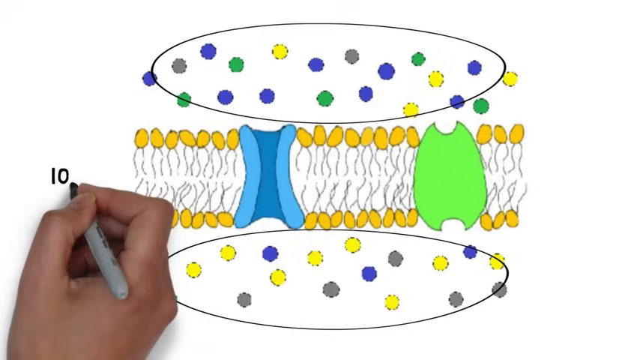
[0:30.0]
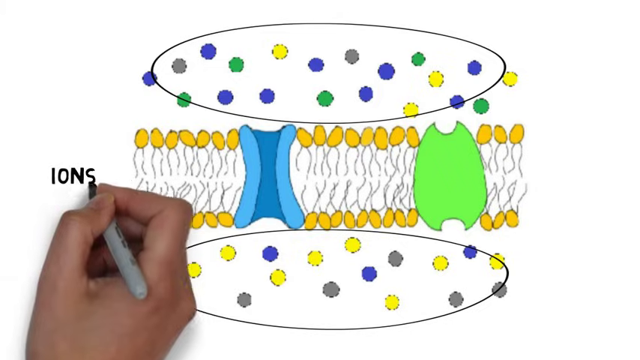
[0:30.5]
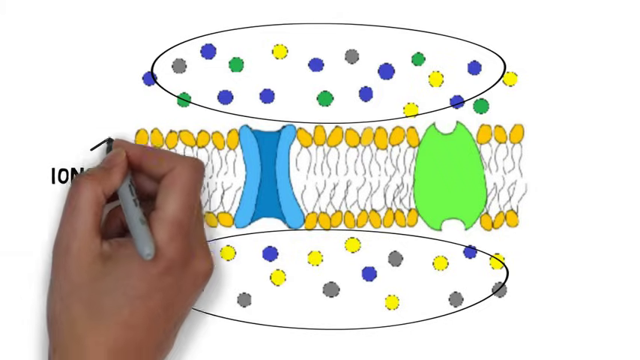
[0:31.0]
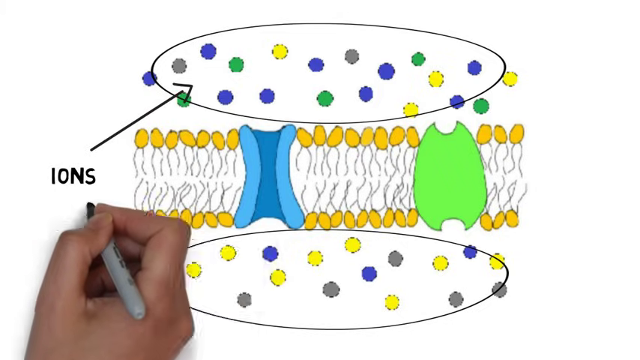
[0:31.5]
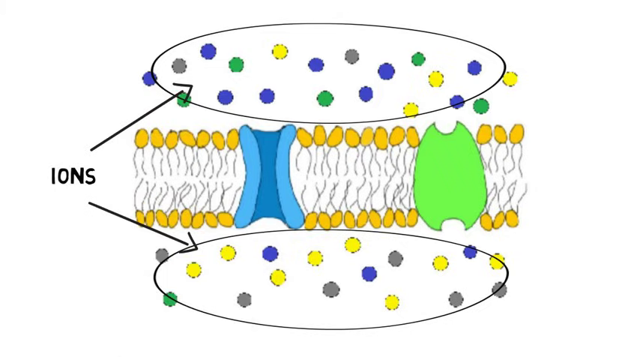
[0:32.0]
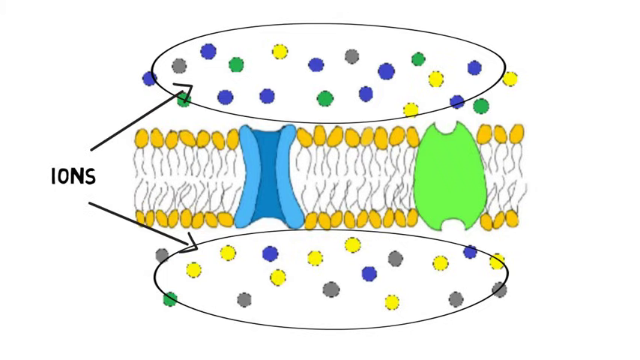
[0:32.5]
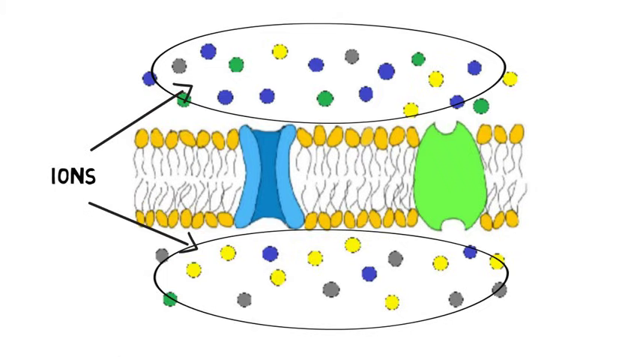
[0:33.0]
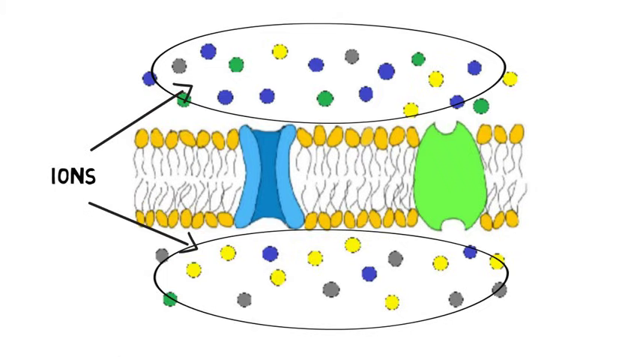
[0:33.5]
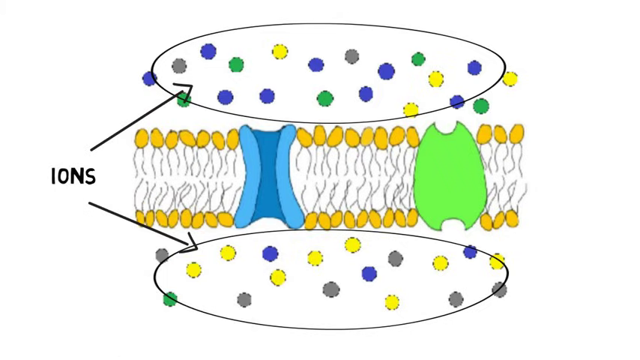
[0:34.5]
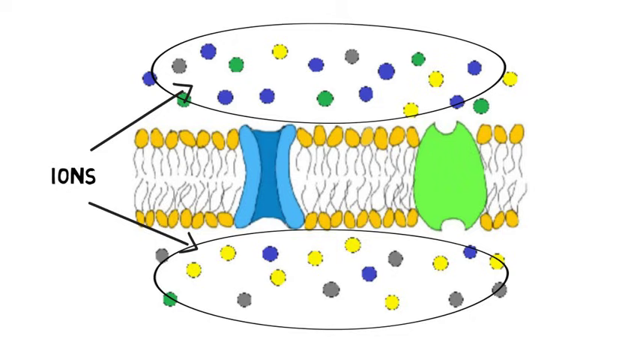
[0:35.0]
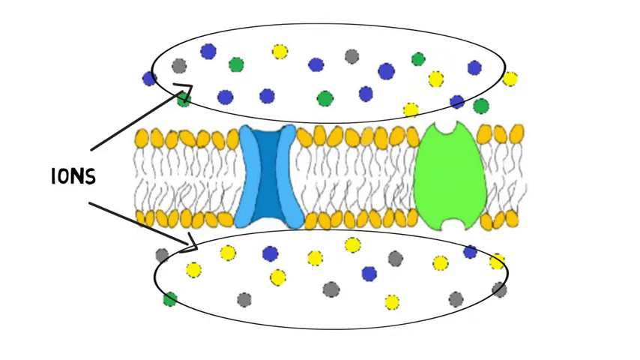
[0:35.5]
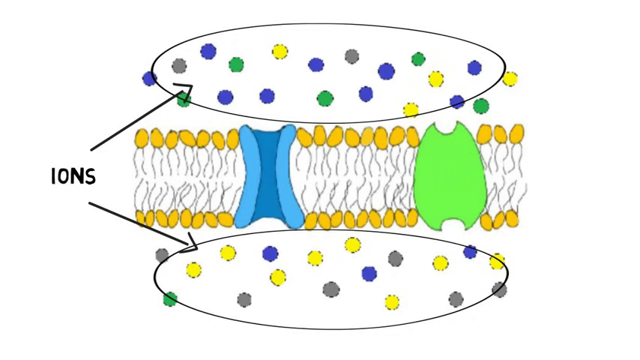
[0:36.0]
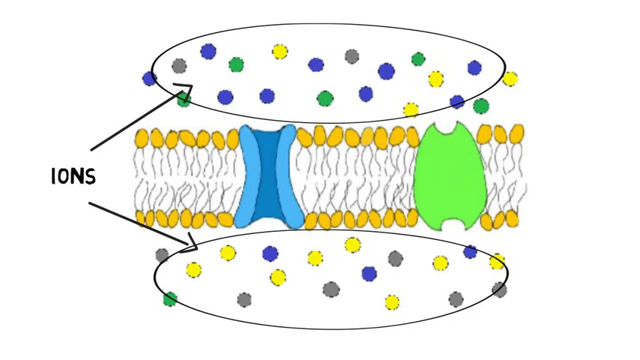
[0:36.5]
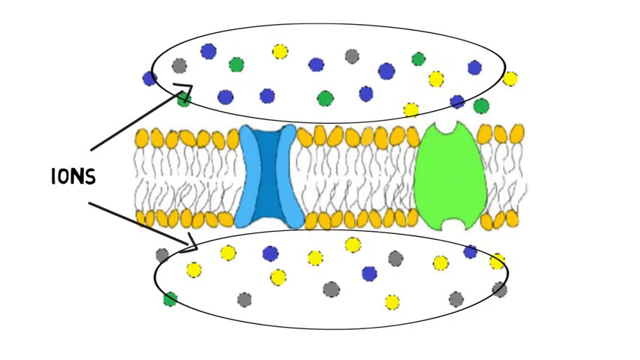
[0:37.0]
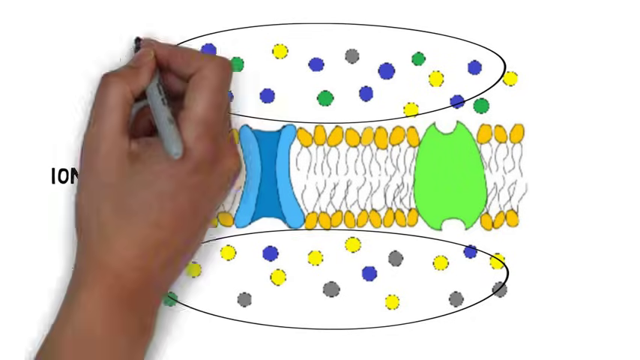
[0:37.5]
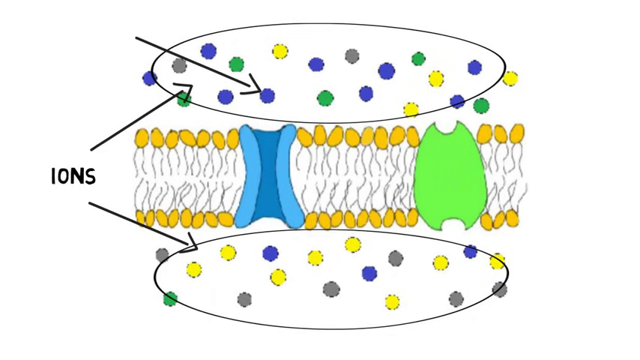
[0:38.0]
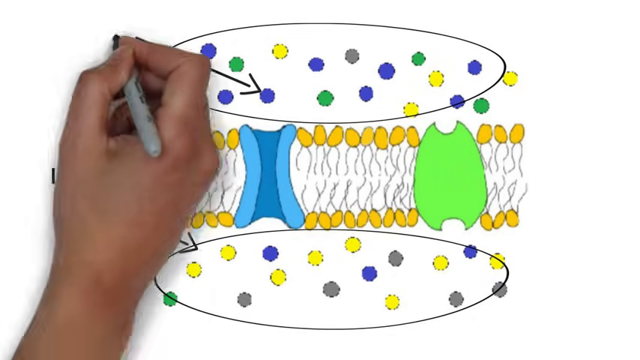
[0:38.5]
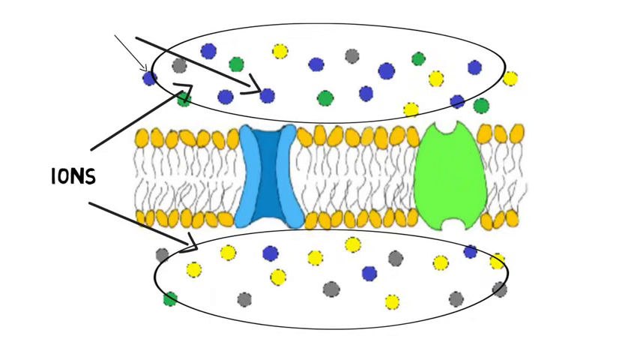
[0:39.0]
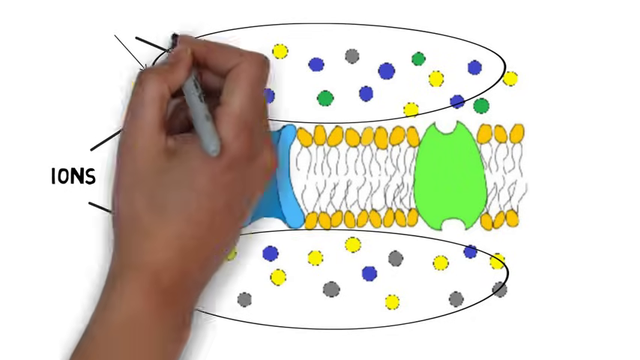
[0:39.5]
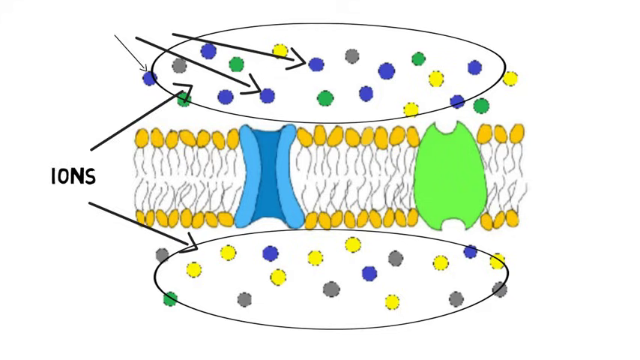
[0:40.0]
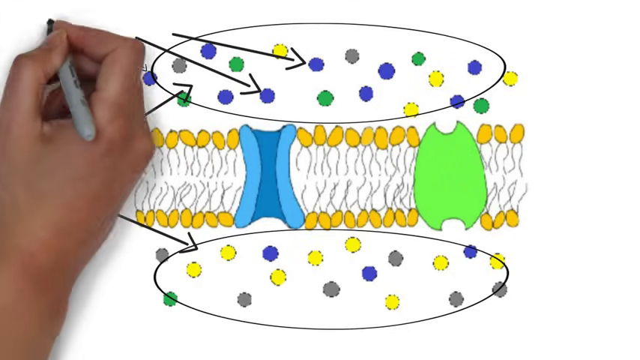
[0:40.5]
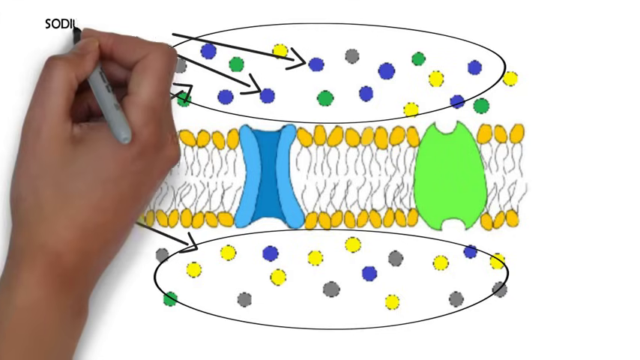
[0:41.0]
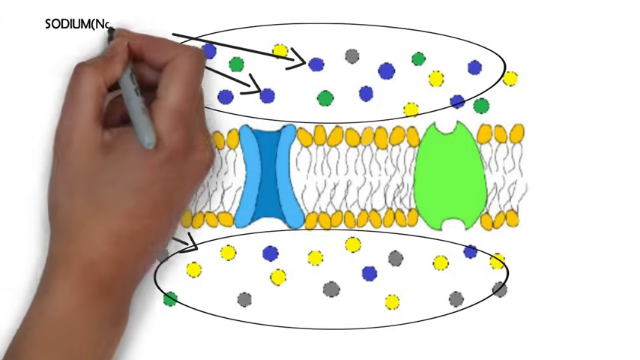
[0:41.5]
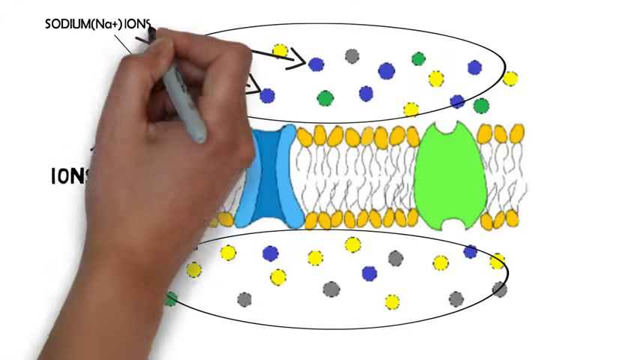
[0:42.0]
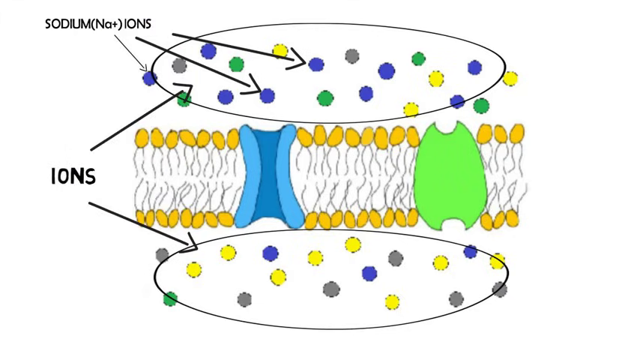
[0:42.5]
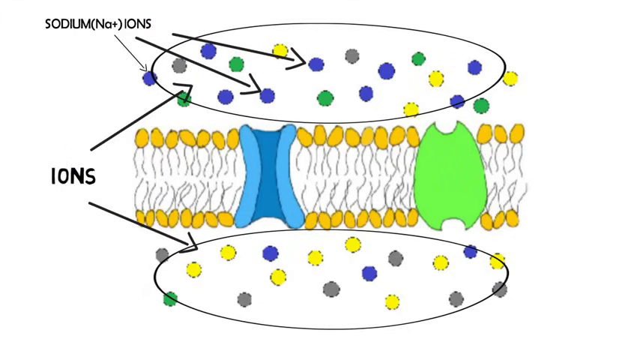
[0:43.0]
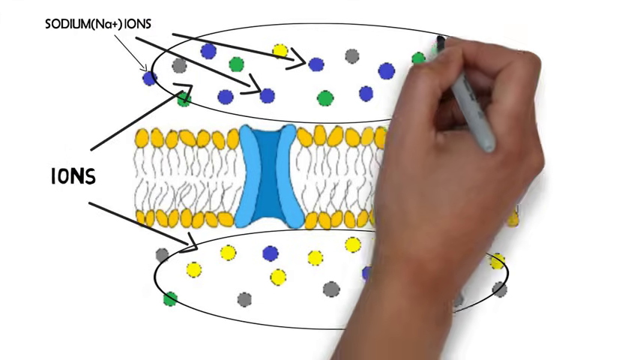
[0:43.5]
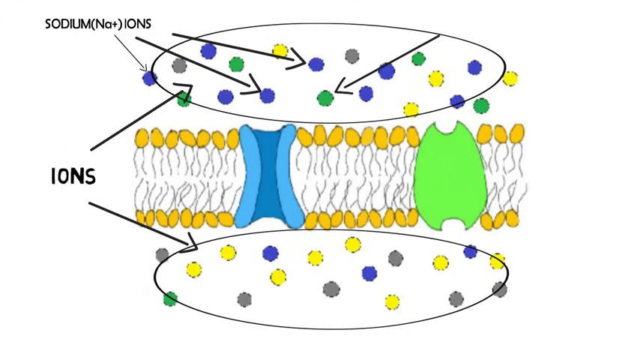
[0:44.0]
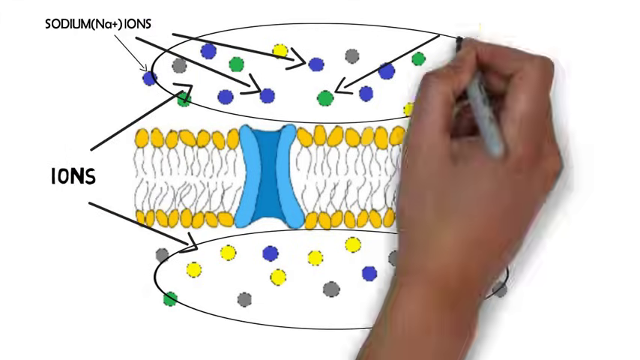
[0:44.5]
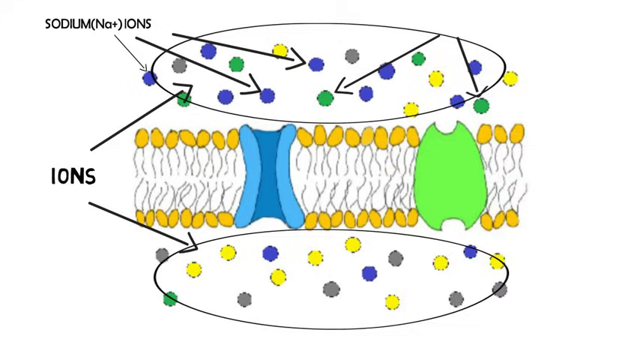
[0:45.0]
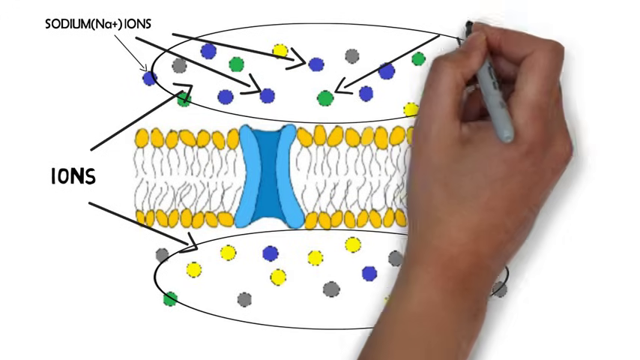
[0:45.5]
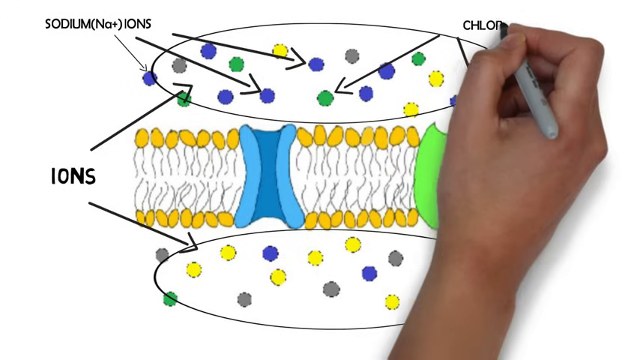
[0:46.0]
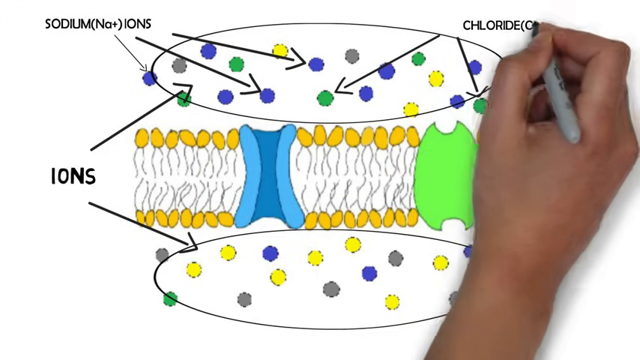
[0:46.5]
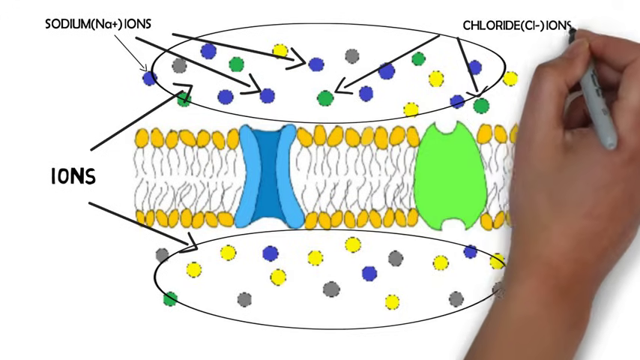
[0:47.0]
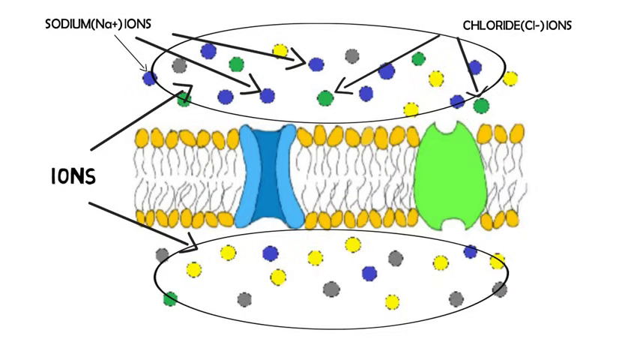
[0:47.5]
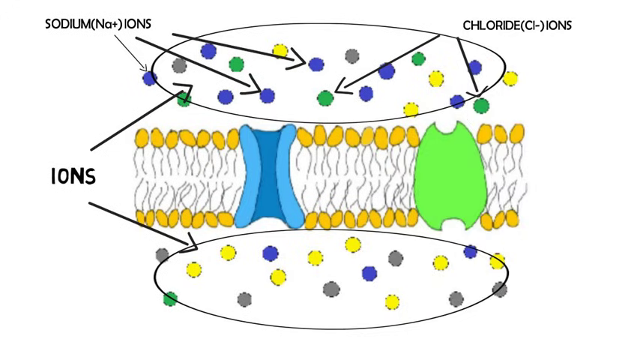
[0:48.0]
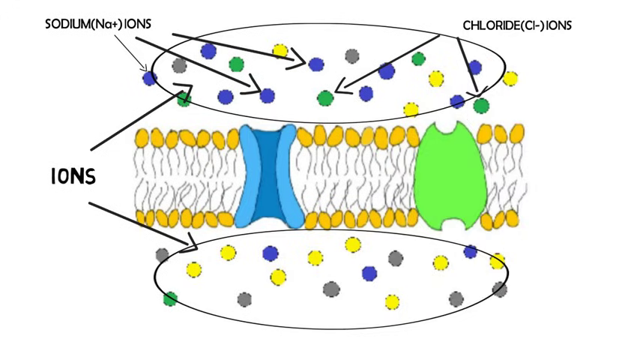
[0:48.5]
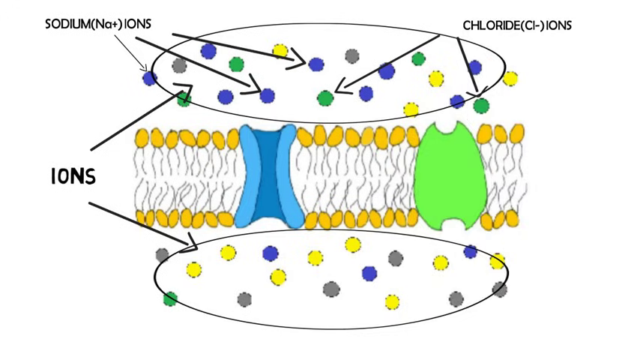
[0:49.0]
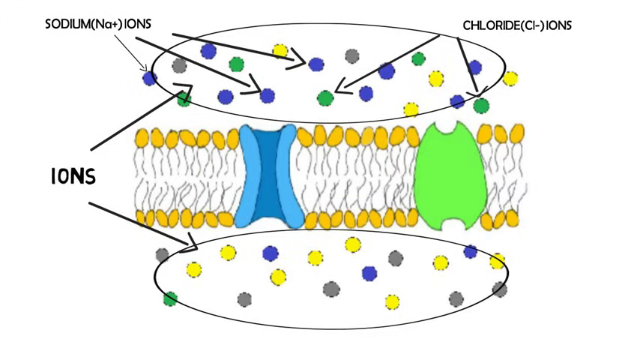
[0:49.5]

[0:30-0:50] The hand writes "ions" and draws pointers to the dots, indicating which kinds of ions they are. The blue dots are sodium ions and the green dots are chloride ions; the sodium ions are positive and the chloride ions are negative.